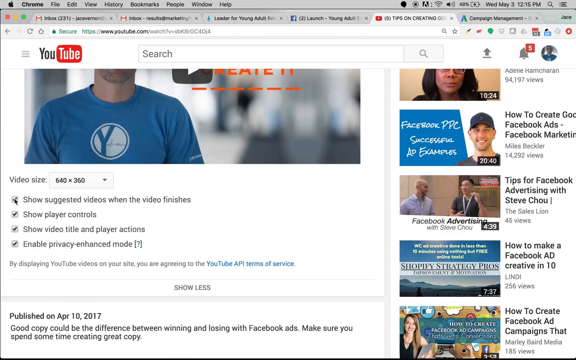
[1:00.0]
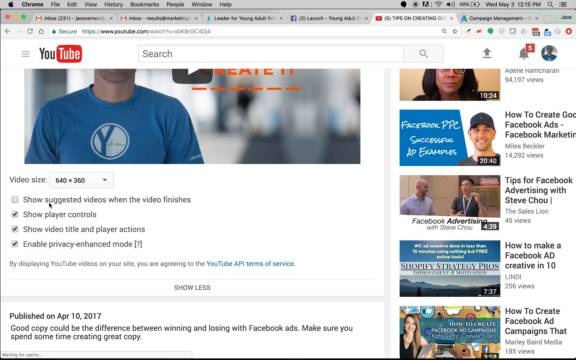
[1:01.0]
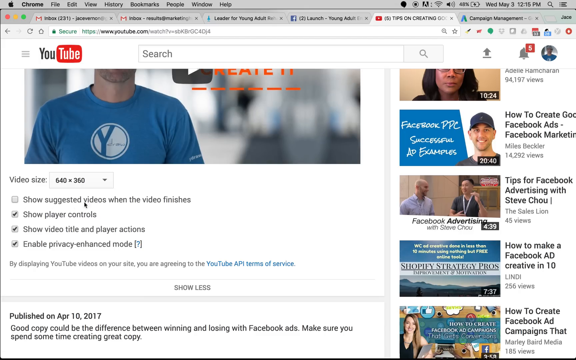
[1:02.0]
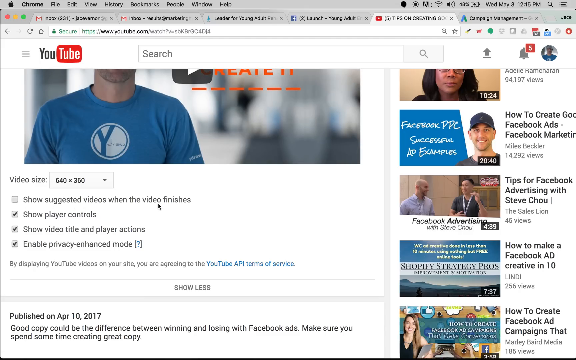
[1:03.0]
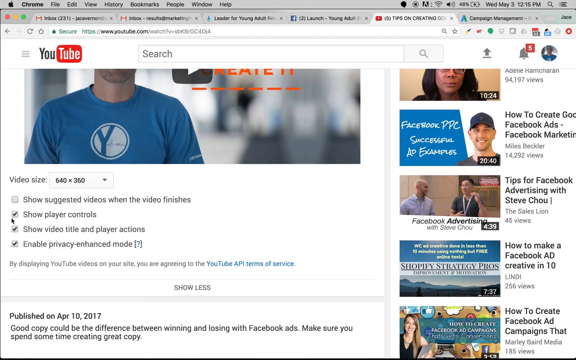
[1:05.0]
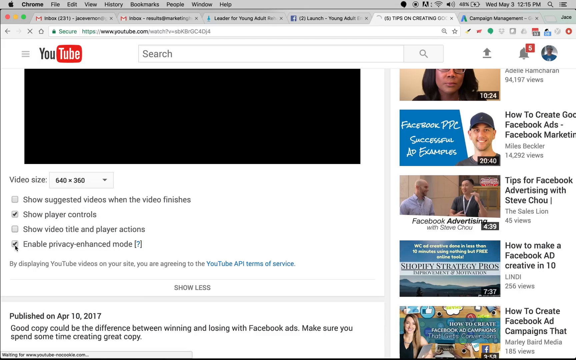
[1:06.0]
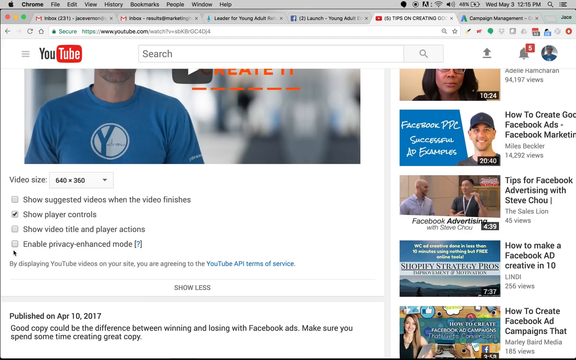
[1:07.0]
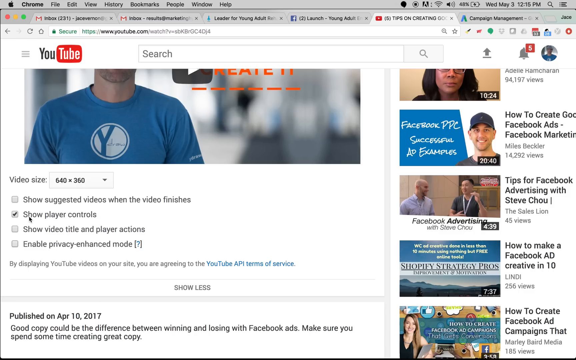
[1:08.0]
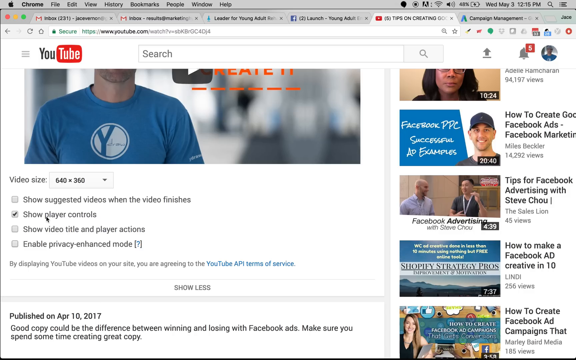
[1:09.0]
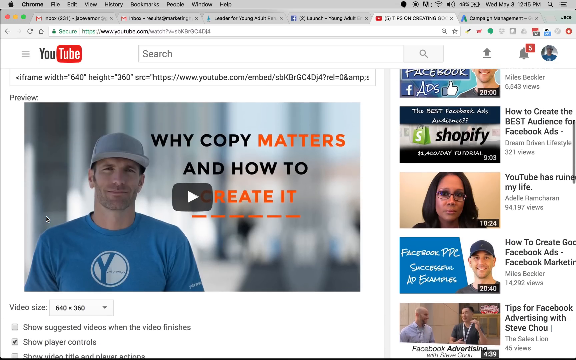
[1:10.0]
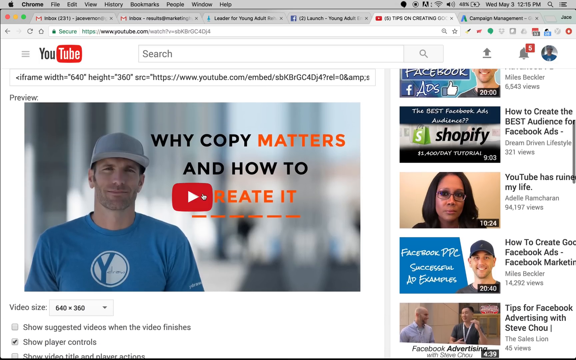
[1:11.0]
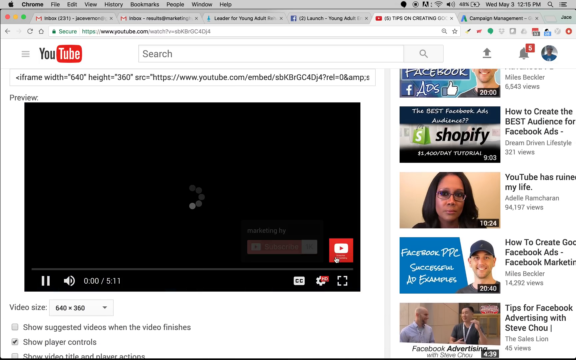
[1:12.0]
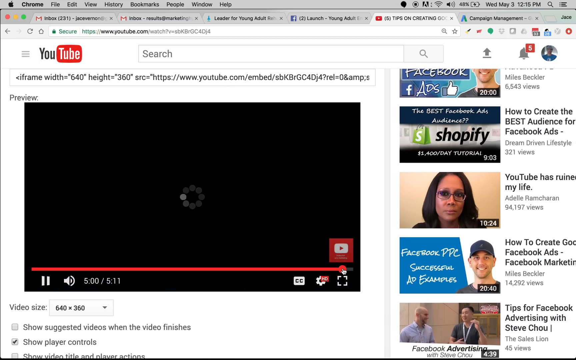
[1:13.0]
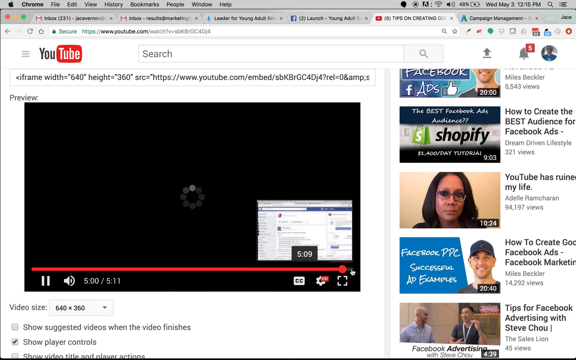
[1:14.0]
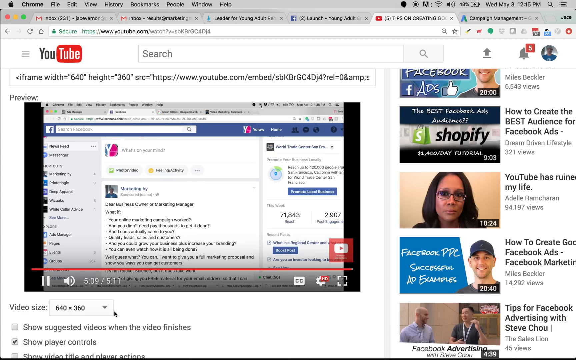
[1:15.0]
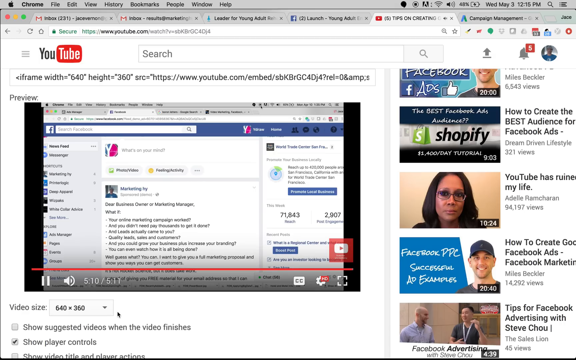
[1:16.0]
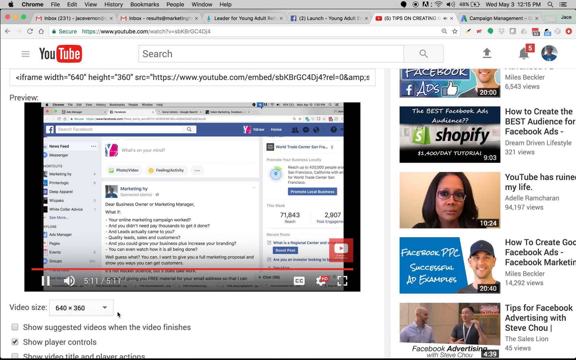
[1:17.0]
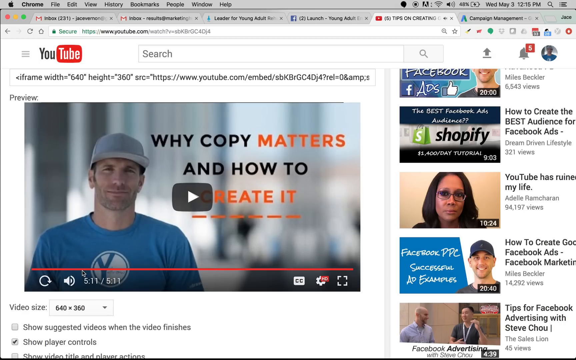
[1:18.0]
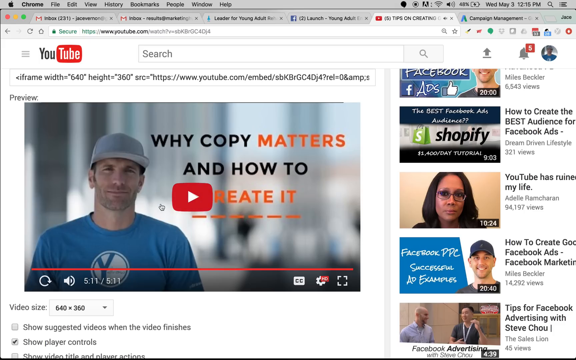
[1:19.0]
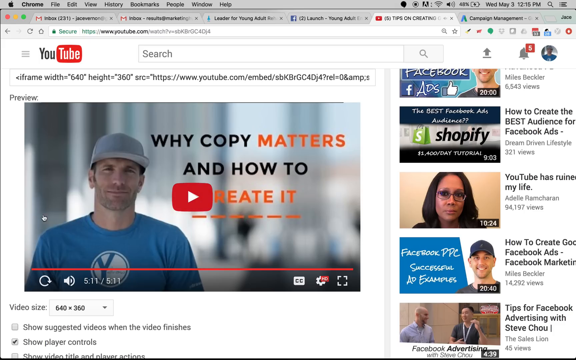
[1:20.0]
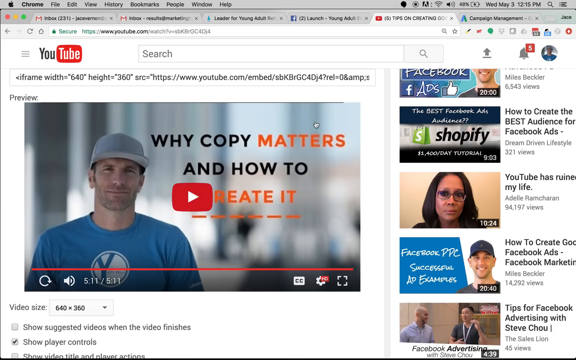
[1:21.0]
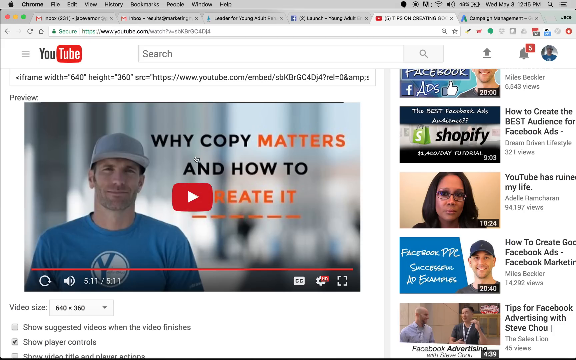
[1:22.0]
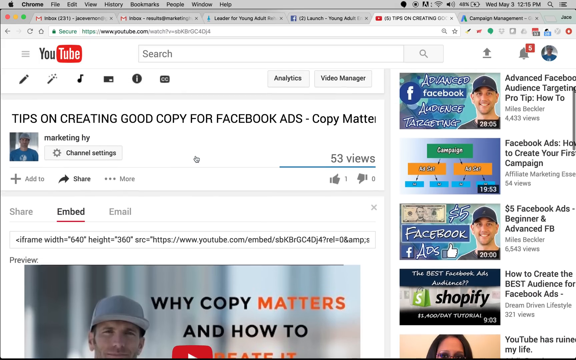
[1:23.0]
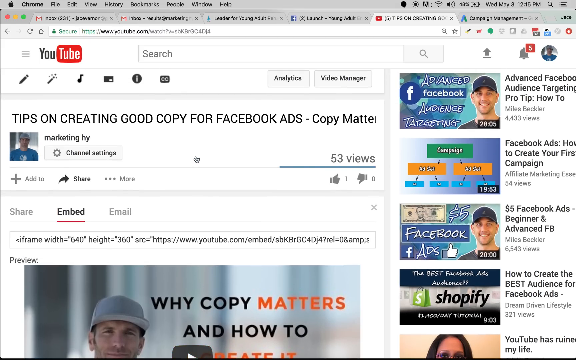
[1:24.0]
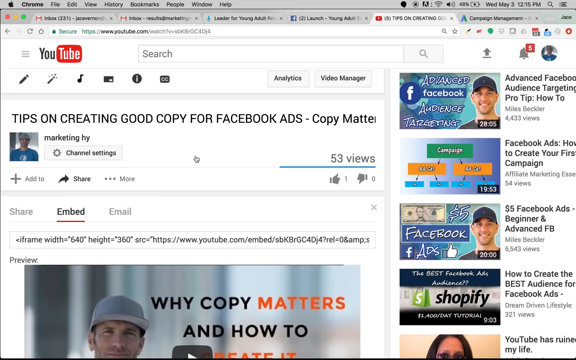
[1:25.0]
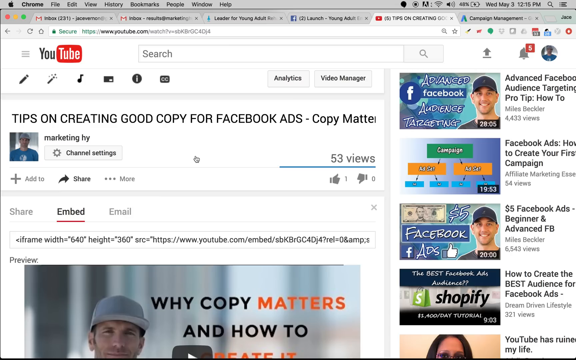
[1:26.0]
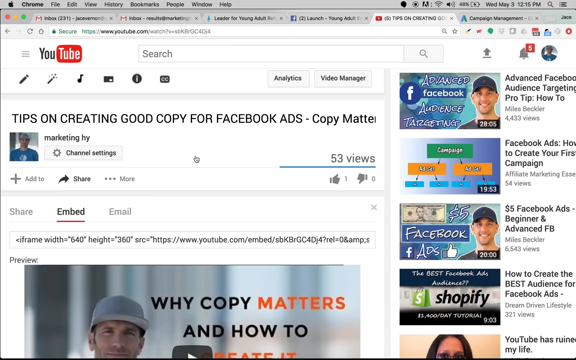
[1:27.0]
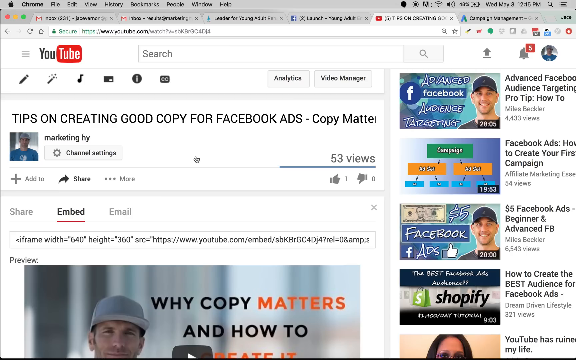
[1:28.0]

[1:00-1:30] A computer screen is shared from a Mac, with the Apple sign in the top left-hand corner. Tabs are open, and the screen shown is the fifth tab. A selected YouTube video has a picture of a man, of whom only the bottom part of his shoulders and the bottom part of his chin are visible. The video size is 640 by 360, and the person sharing the screen has ticked the boxes "show player video title and player actions" and "enable privacy enhanced mode". To the right are lots of suggested videos on how to create Facebook ads and on Facebook marketing. The person moves their mouse about, selecting and unselecting certain tabs. The video is called "why copy matters and how to create it". A full image of the man who created the YouTube video then appears: he wears a white baseball cap and a blue T-shirt.